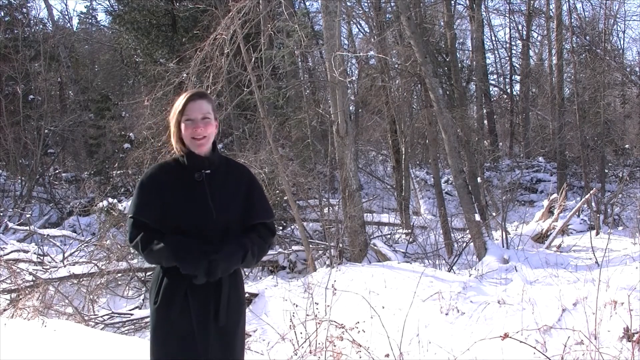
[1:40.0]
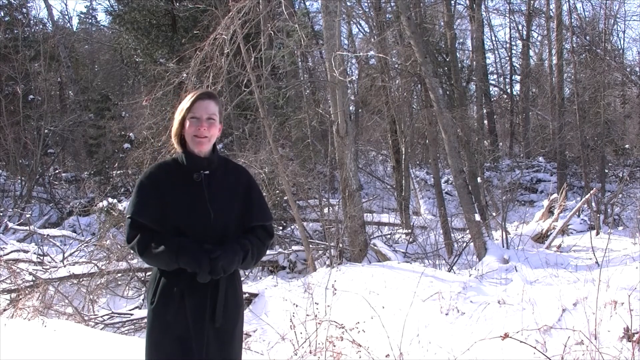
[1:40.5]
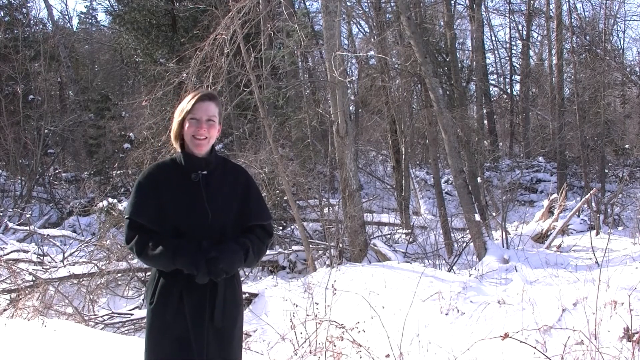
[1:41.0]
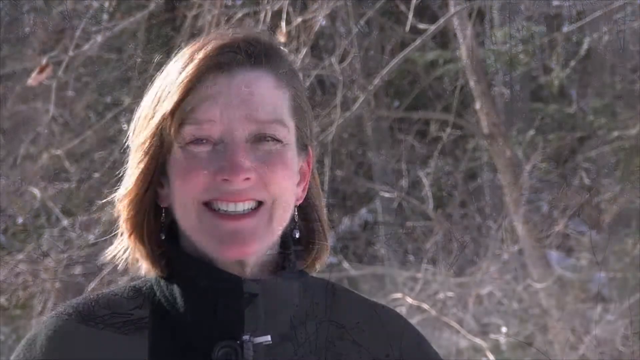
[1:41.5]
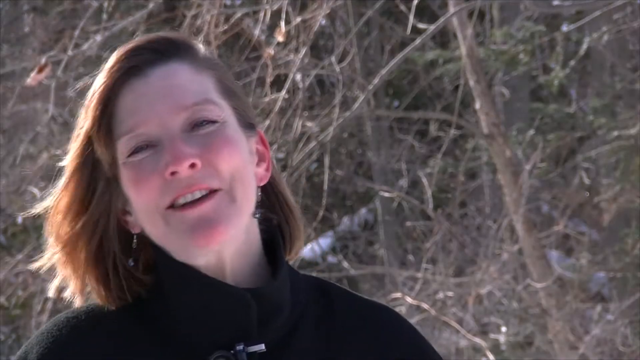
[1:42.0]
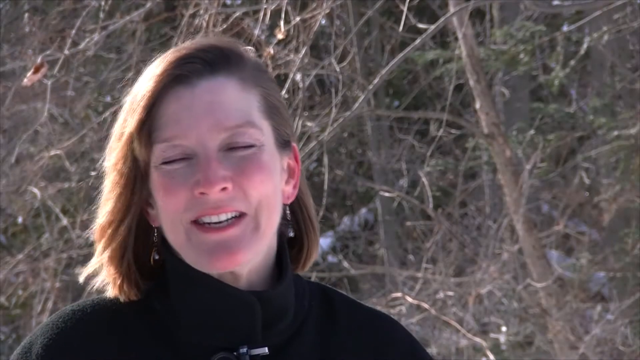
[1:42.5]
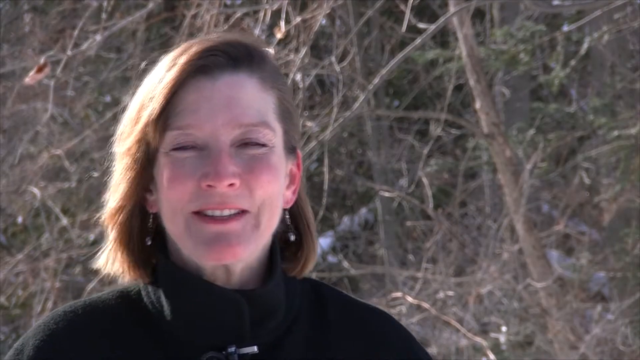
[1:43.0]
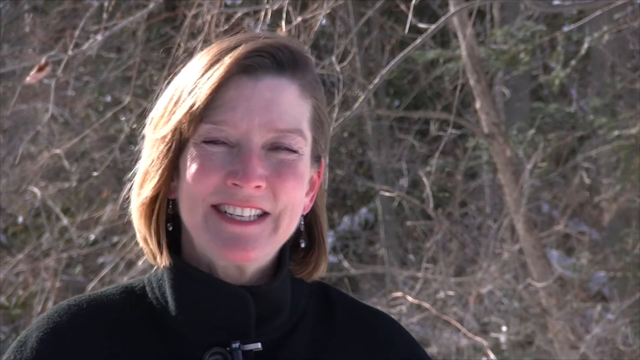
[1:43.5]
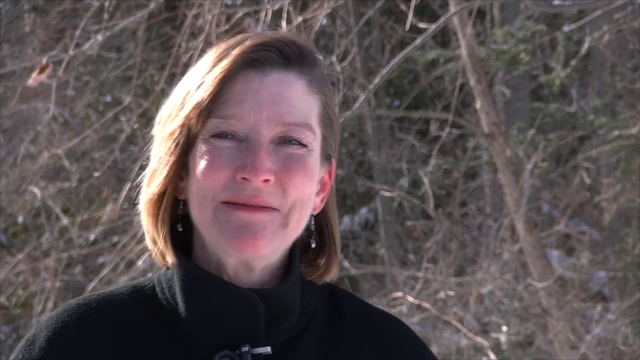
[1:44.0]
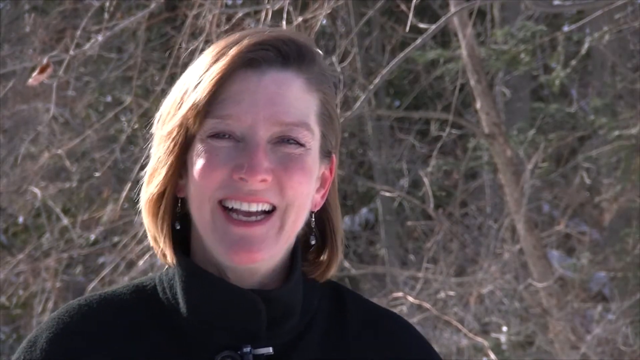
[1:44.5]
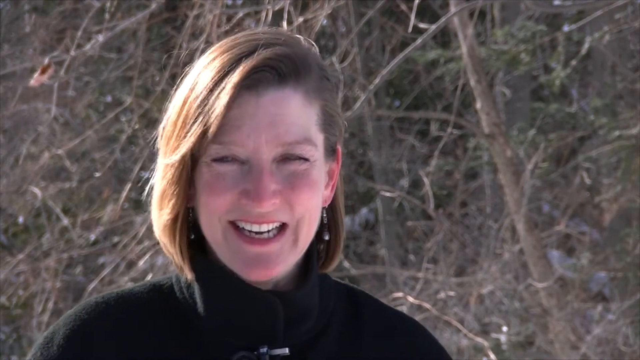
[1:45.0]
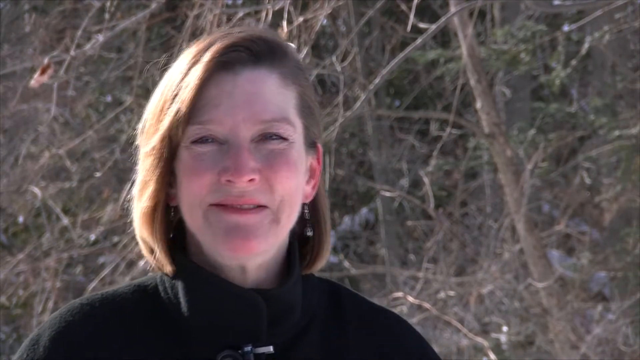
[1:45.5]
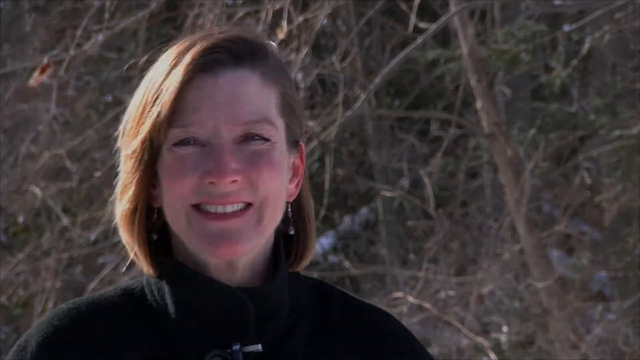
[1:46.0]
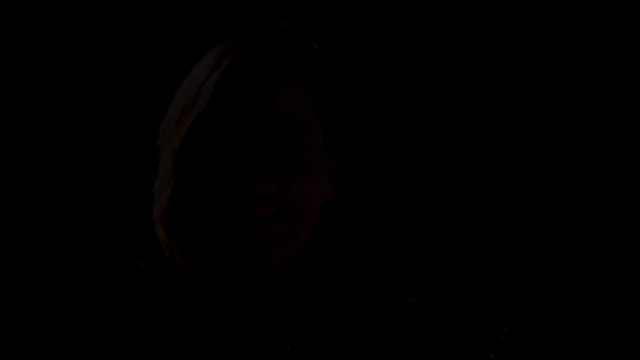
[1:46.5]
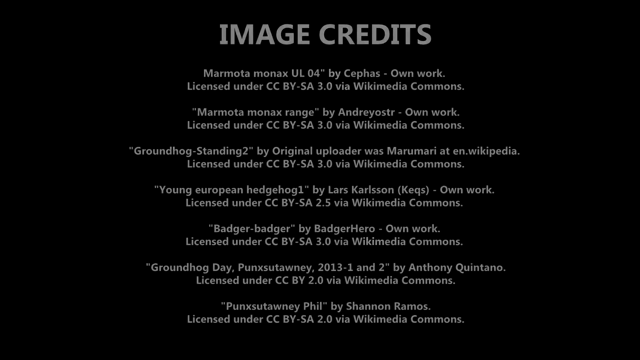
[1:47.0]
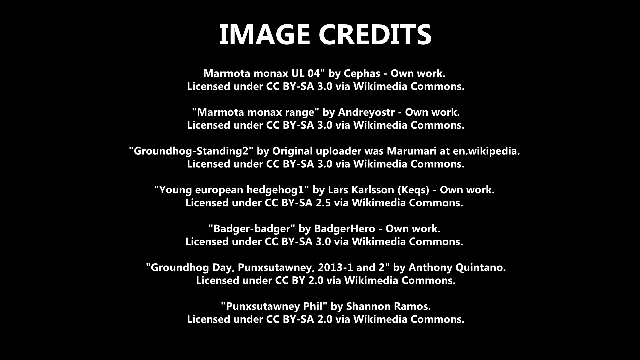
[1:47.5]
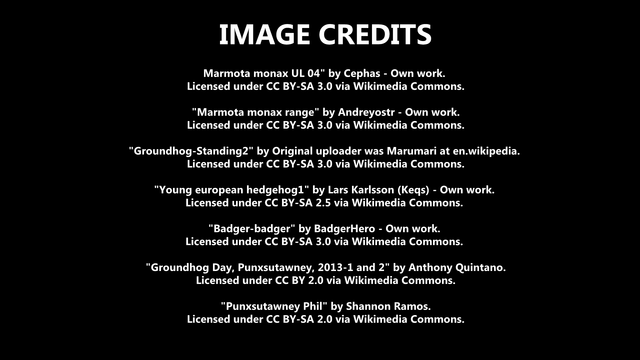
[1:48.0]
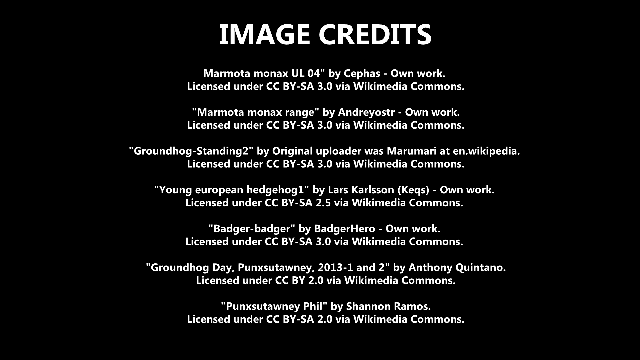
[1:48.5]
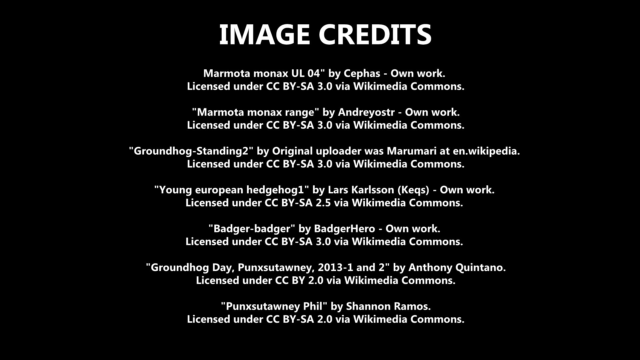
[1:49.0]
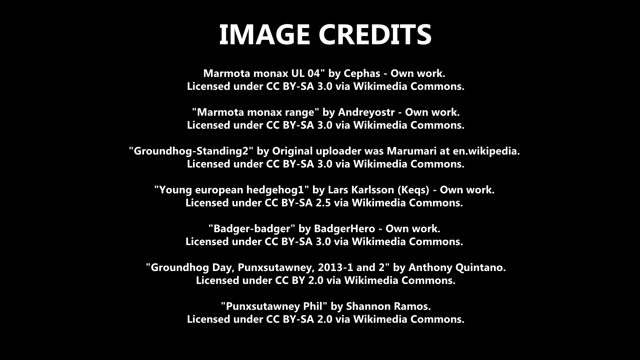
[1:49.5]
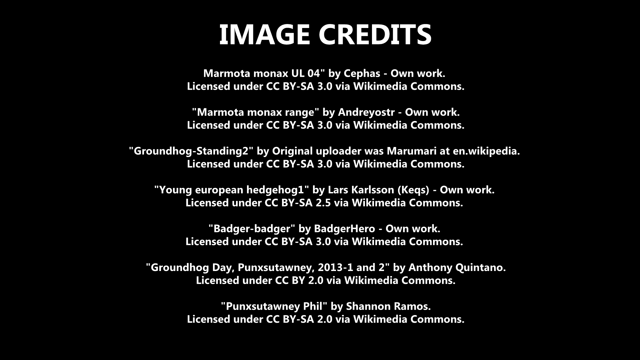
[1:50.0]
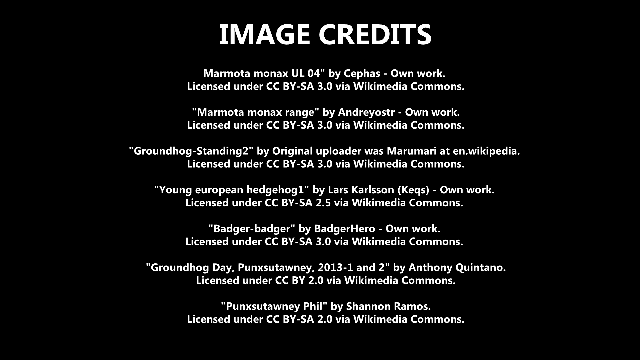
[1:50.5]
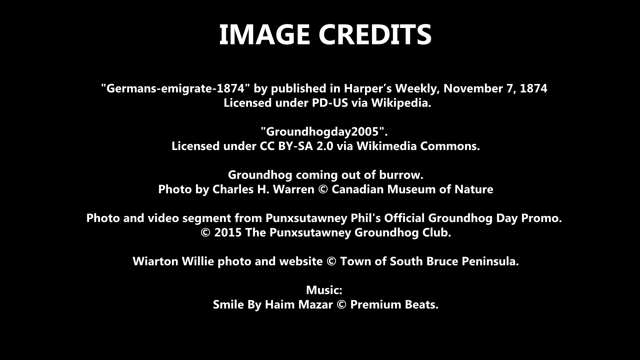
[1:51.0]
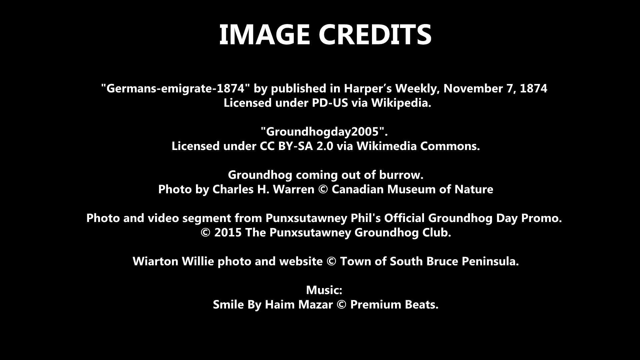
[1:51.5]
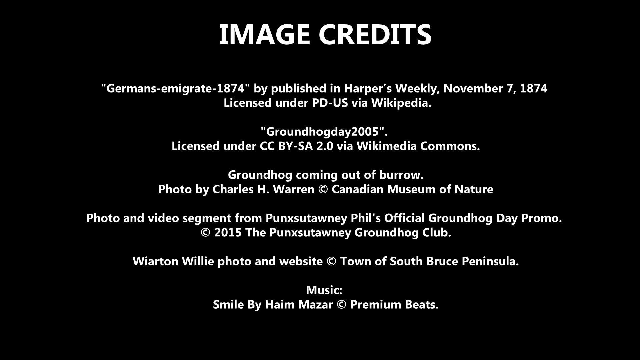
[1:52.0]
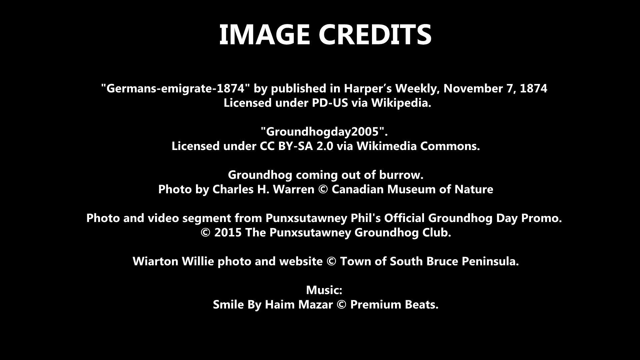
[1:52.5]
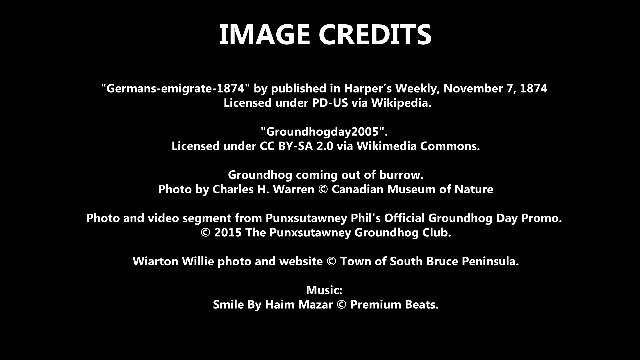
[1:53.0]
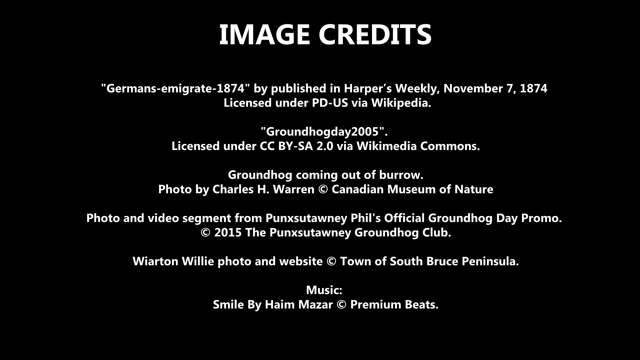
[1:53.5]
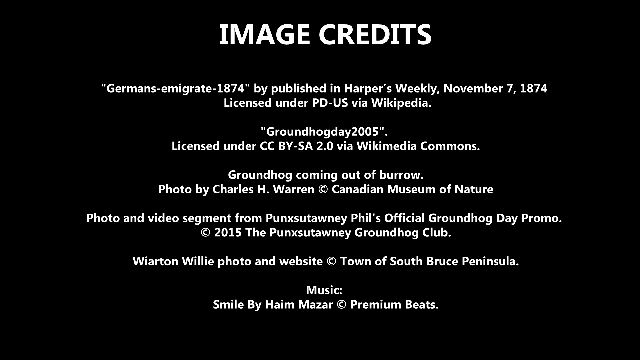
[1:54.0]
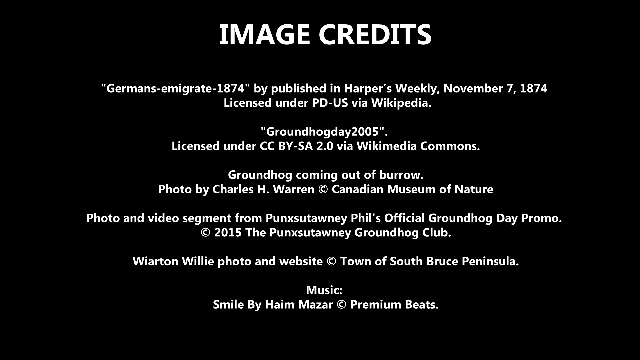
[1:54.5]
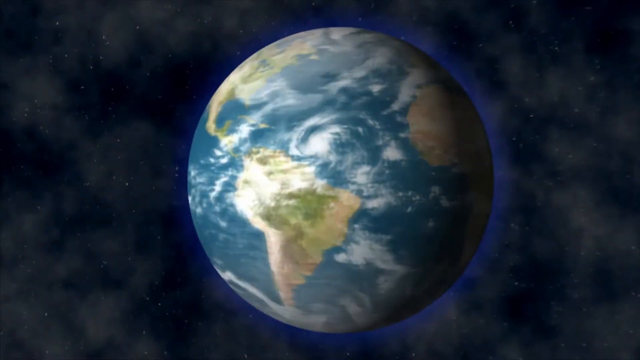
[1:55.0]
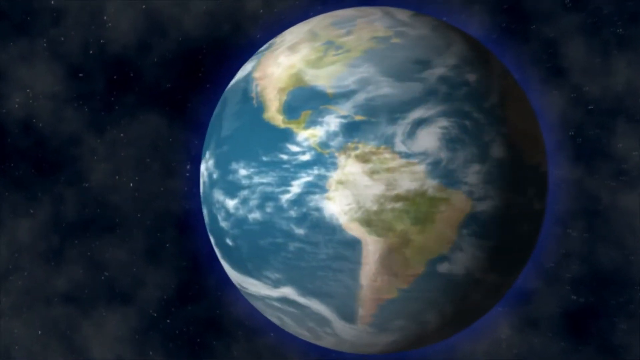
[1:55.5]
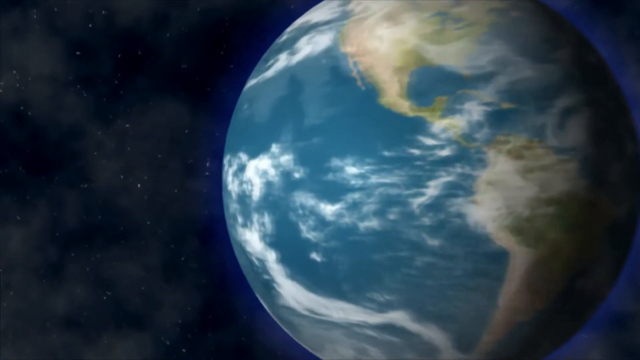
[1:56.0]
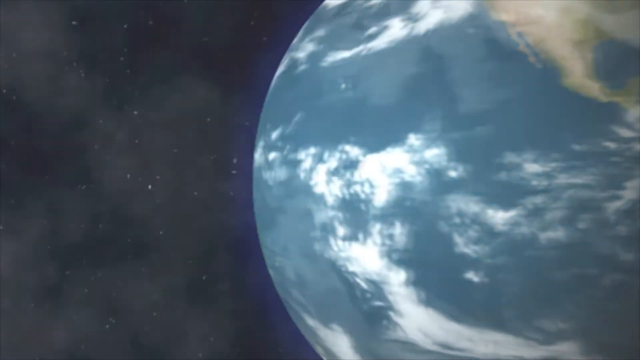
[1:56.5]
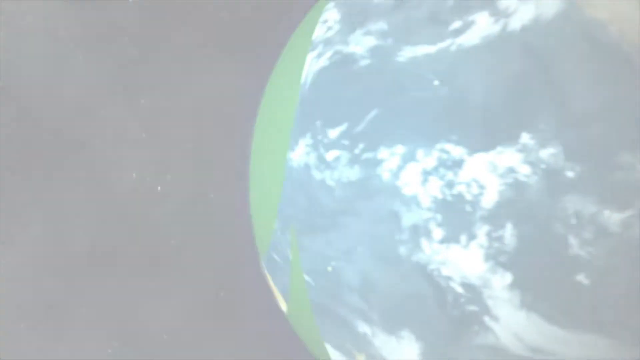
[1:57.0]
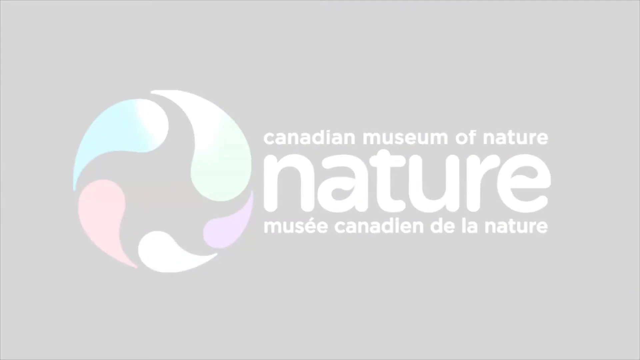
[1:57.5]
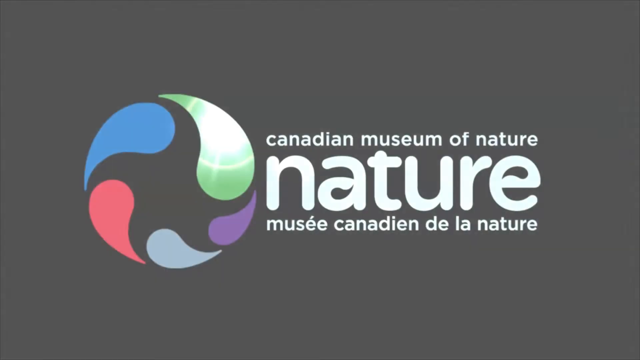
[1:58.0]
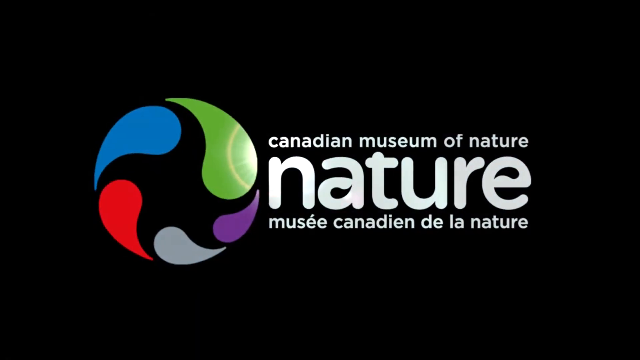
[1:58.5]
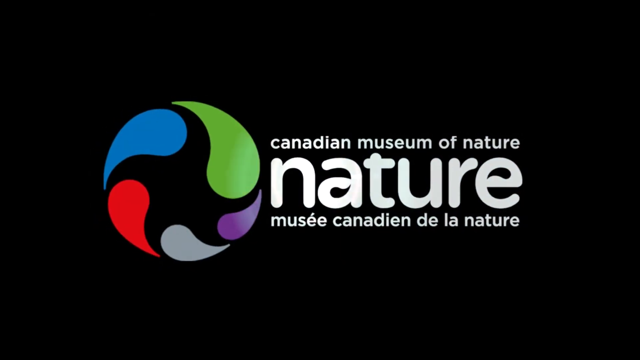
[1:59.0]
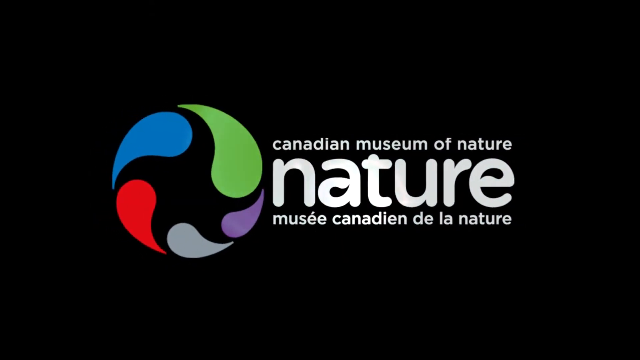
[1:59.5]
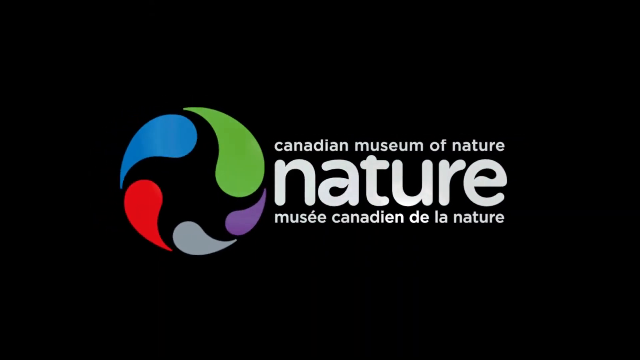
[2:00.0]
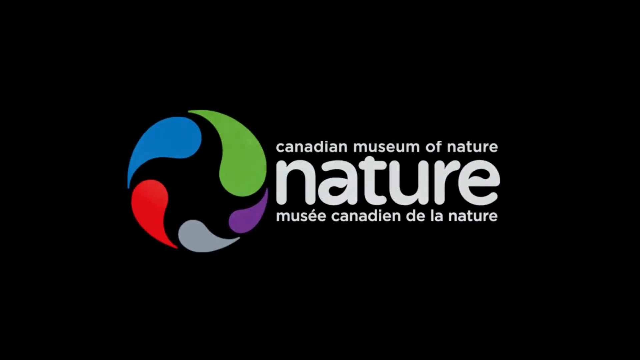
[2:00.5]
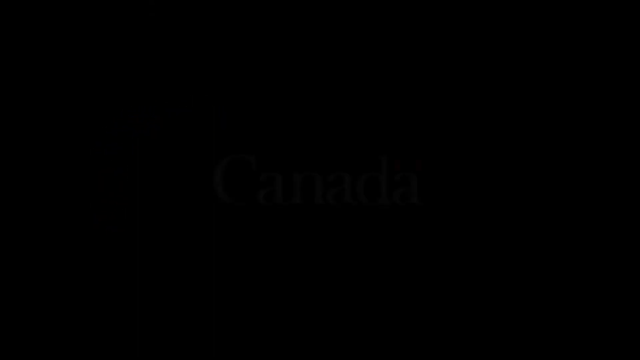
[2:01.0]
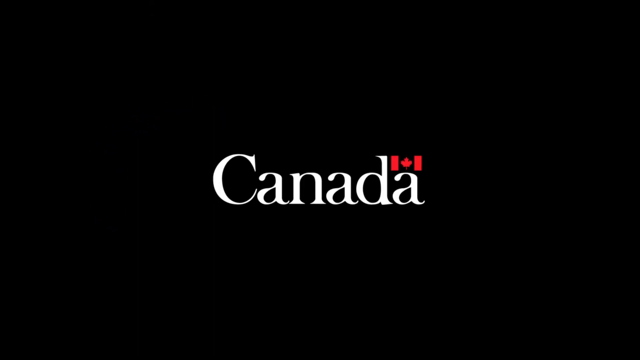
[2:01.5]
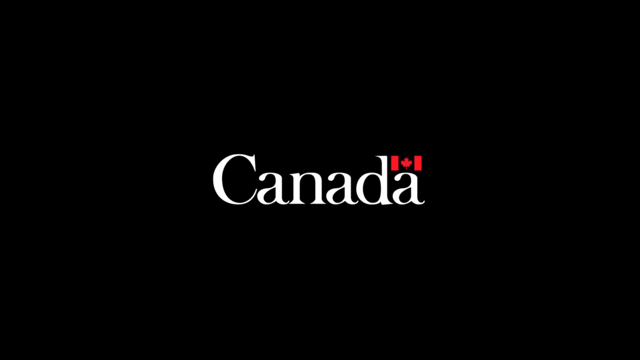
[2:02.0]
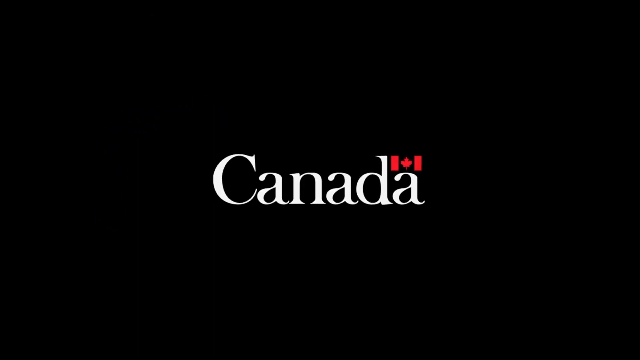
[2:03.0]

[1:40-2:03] The presenter stands slightly left of center with her hands clasped in front of her, her hair moving in the breeze. Her head turns and tilts slightly to the right, then tilts more noticeably to the left, her hair moving to the left along with it. The camera zooms in somewhat on her face as she smiles broadly. She wears earrings, sunlight strikes her hair strongly from the side, and she laughs and smiles broadly while her body sways left to right as she speaks. The camera fades to black. Image credits follow on a completely black background with all-white lettering: "Image credits" in large uppercase, followed by the animals featured, including the marmot, the groundhog, hedgehog, badger, and Puxatawney Phil, with their credits. The screen changes to credits for German immigrants, Groundhog Day, "Groundhog Coming Out of Burrow", the photo segment of Puxatawney Phil, and Wiarton Willie on the Bruce, followed by the music credits, scrolling through. A spinning Earth appears, turning counterclockwise, with the night sky somewhat lighter and then pure black. As the globe keeps spinning, the Canadian Museum of Nature logo appears, reading "nature museum of nature", with swirling wave-like or water-drop-like patterns around a black center on an all-black background. An animated light passes over the droplets of color, mostly green and then purple, silver, red and blue. The logo recedes, or the camera moves back from it, then quickly fades and turns into the Canada logo with the word "Canada".